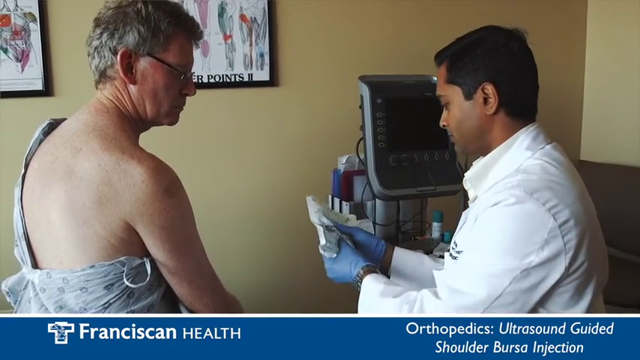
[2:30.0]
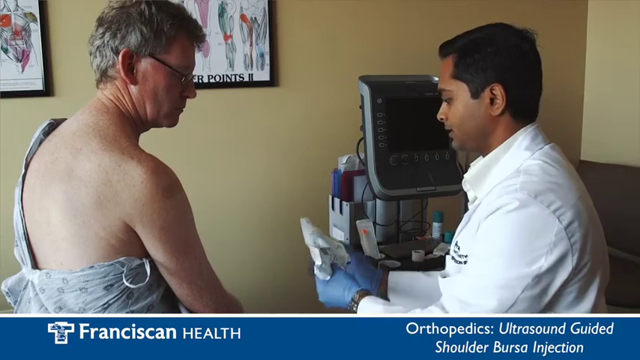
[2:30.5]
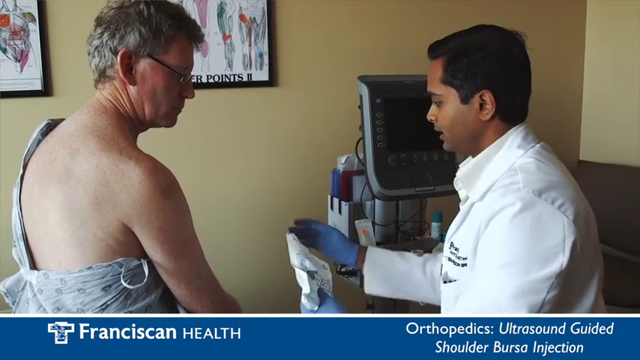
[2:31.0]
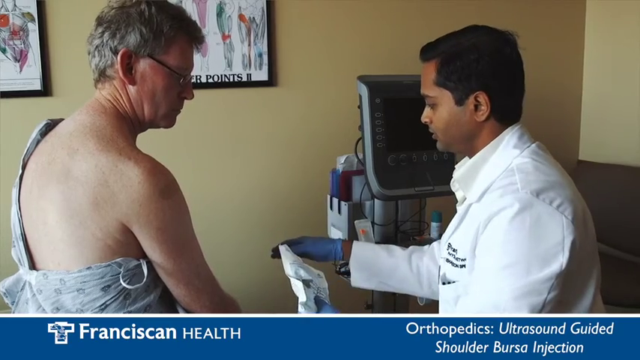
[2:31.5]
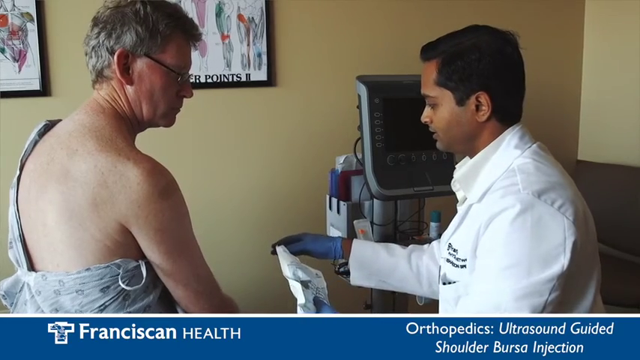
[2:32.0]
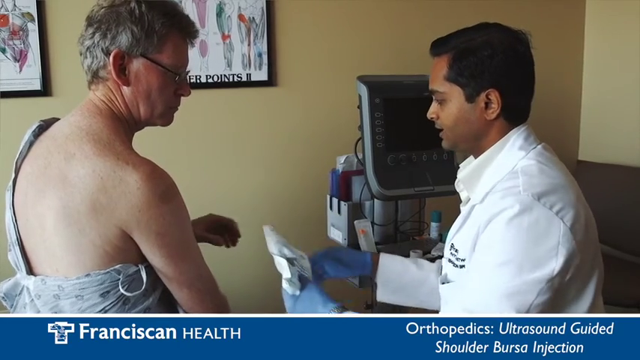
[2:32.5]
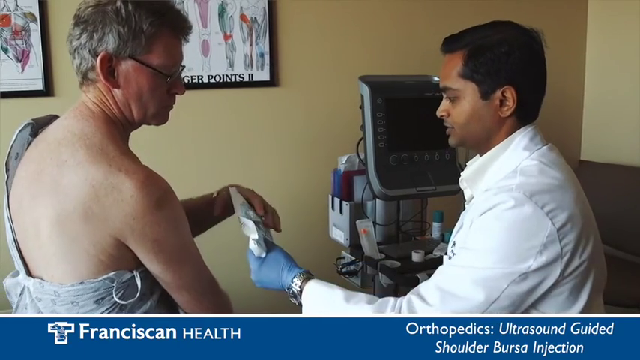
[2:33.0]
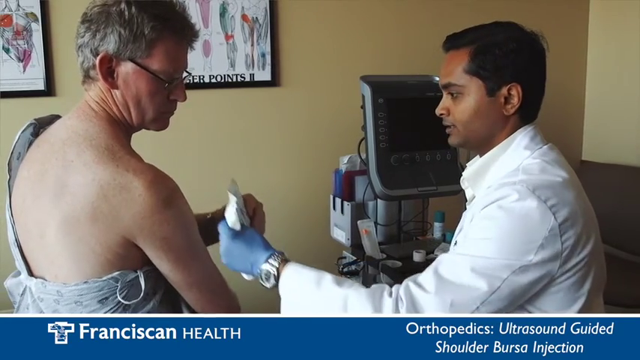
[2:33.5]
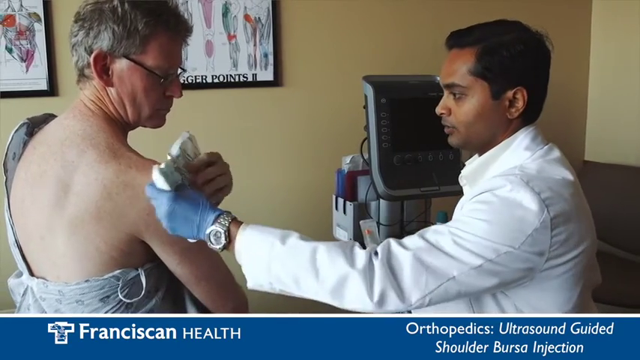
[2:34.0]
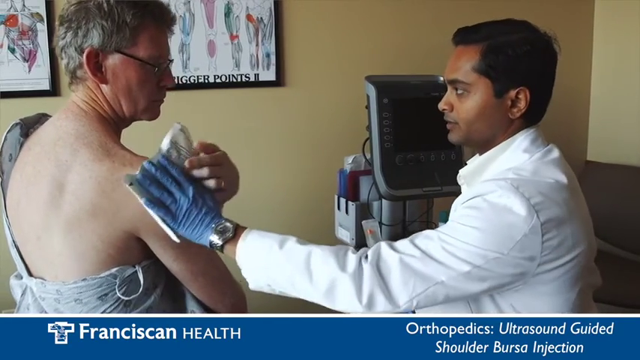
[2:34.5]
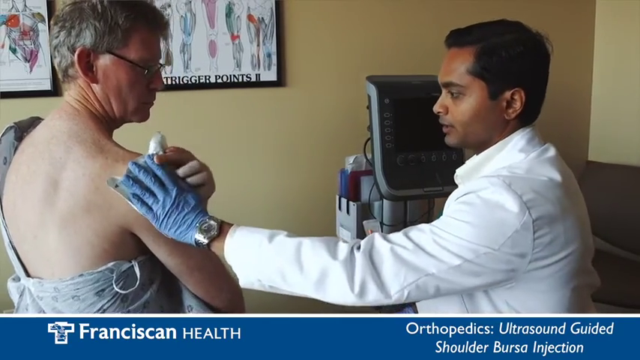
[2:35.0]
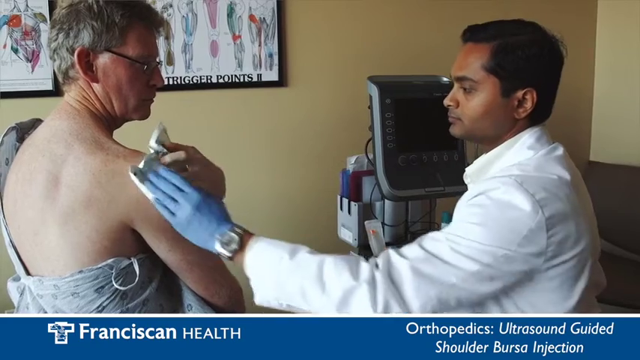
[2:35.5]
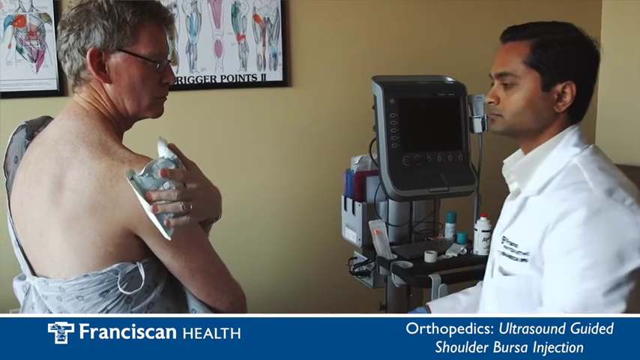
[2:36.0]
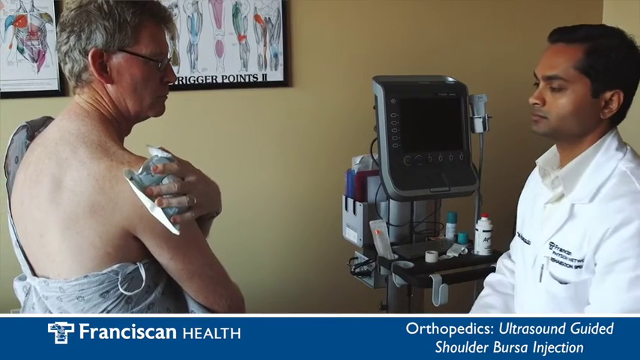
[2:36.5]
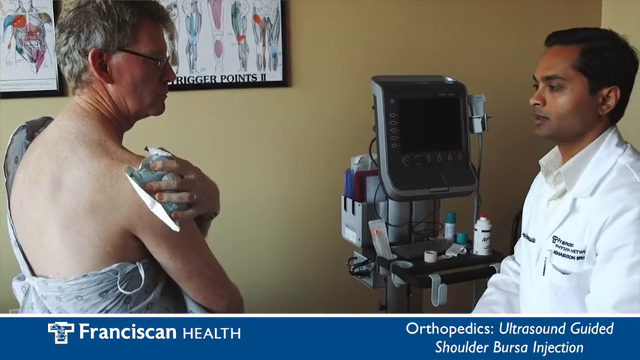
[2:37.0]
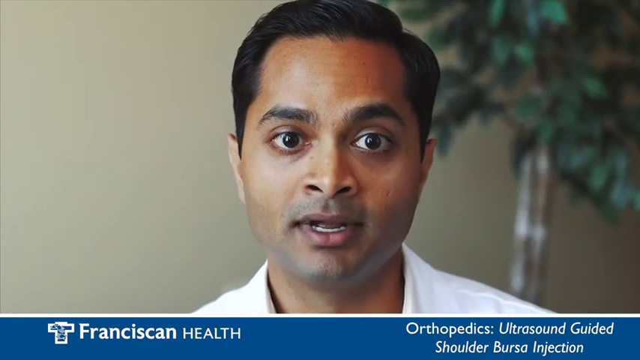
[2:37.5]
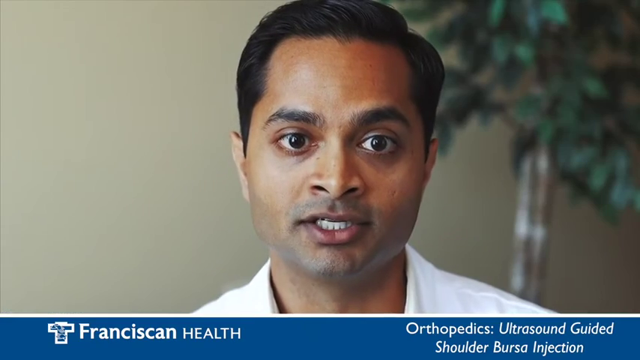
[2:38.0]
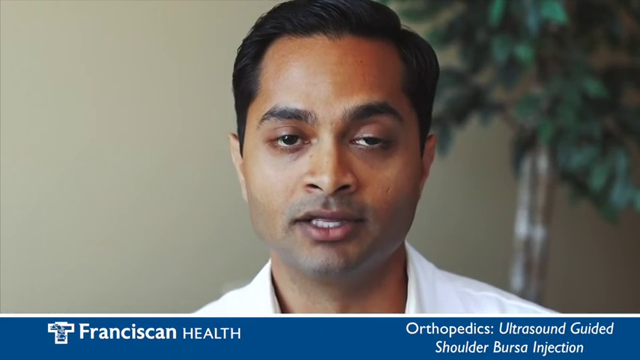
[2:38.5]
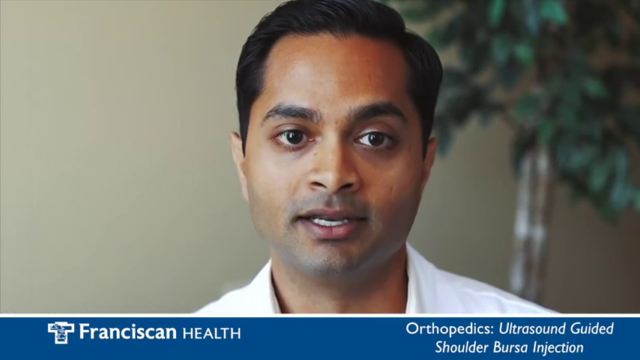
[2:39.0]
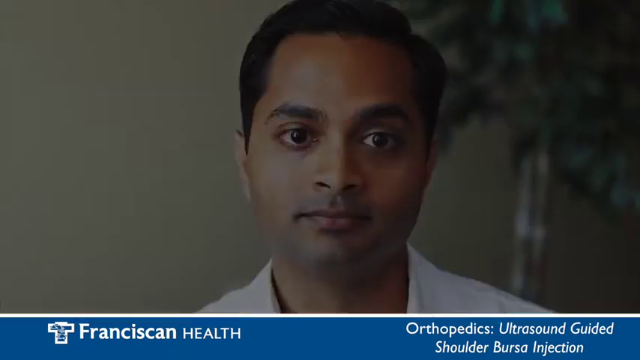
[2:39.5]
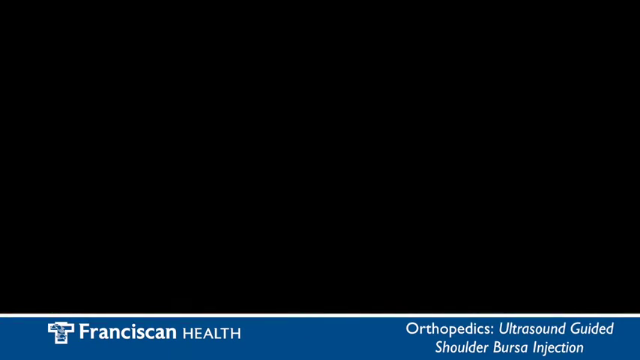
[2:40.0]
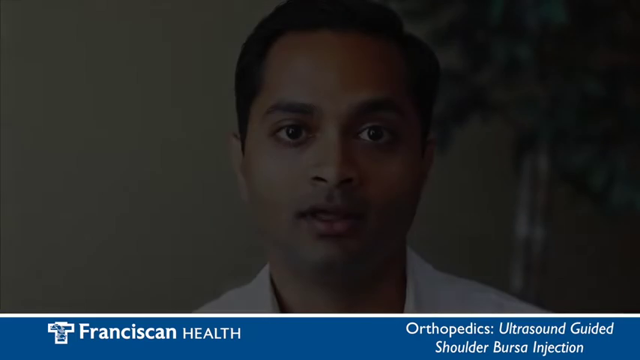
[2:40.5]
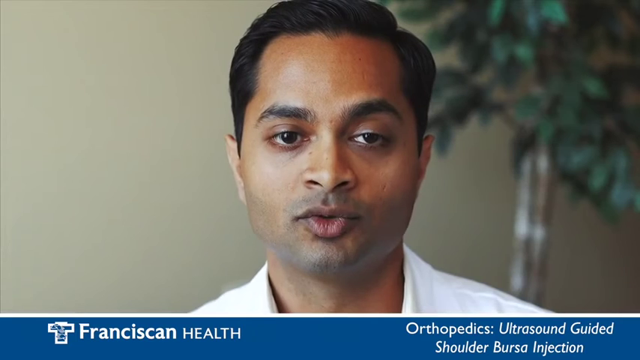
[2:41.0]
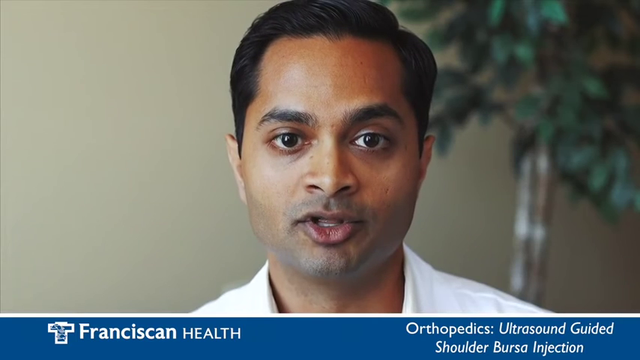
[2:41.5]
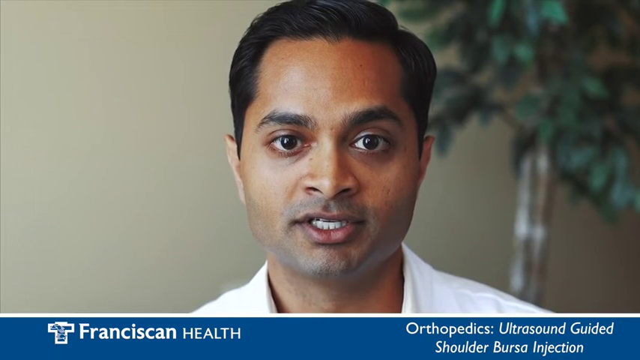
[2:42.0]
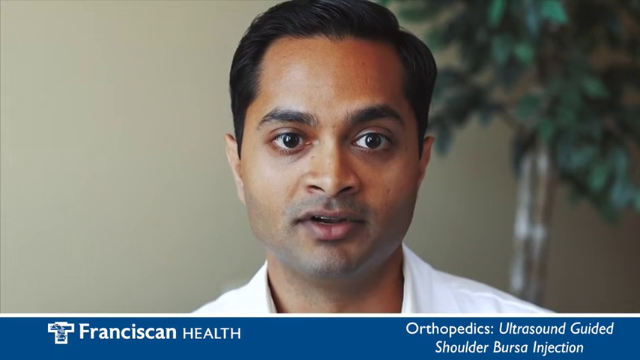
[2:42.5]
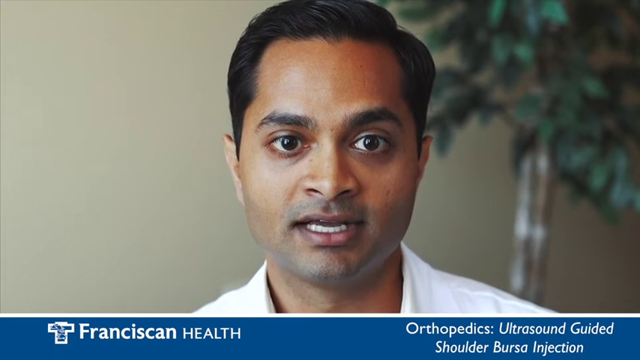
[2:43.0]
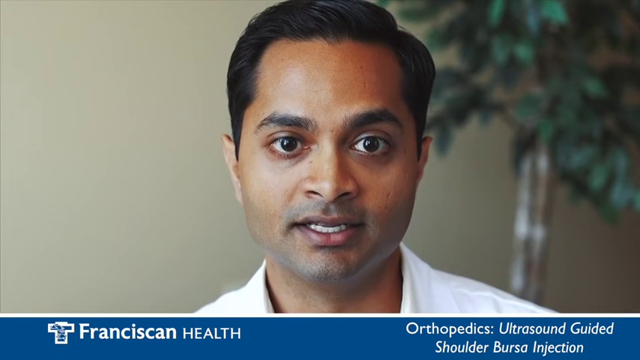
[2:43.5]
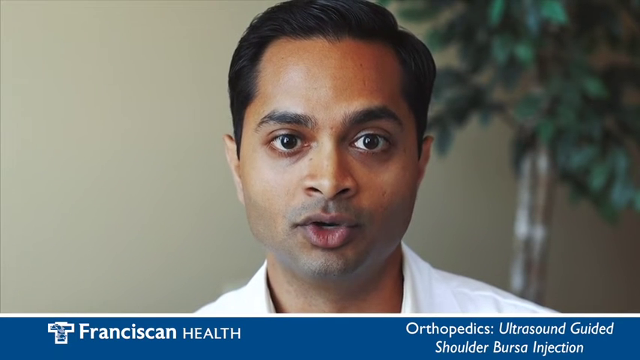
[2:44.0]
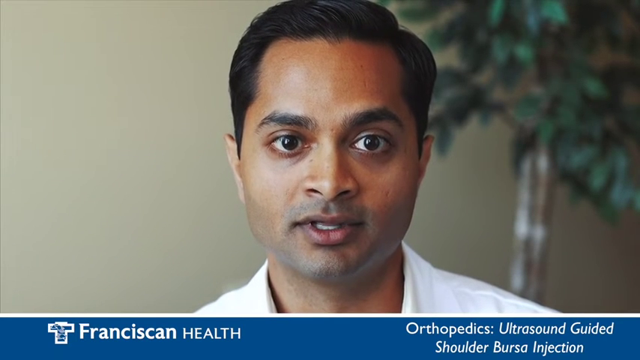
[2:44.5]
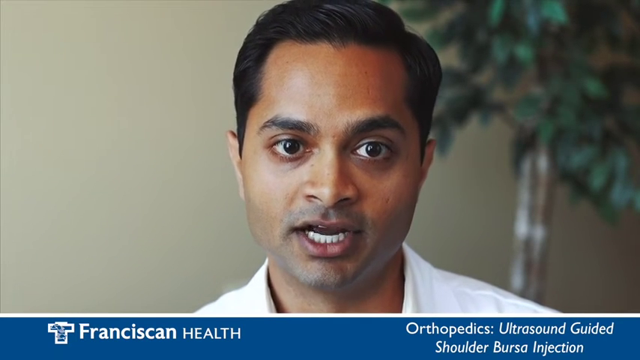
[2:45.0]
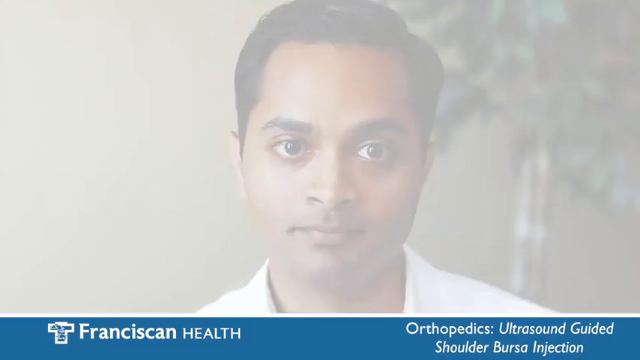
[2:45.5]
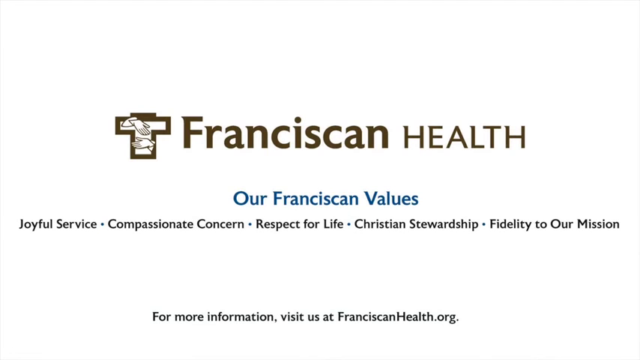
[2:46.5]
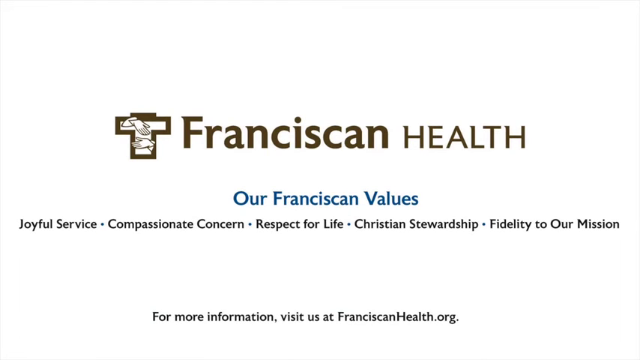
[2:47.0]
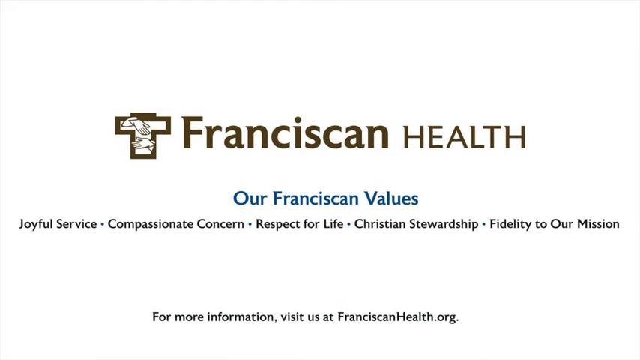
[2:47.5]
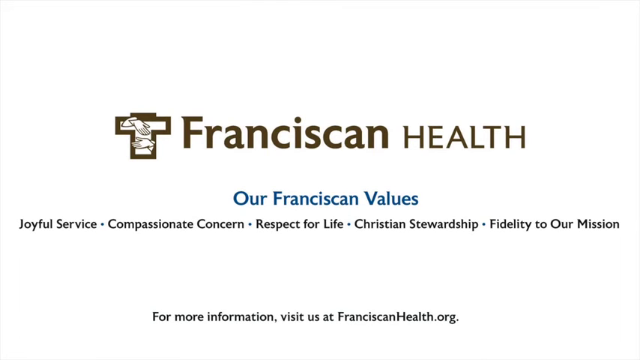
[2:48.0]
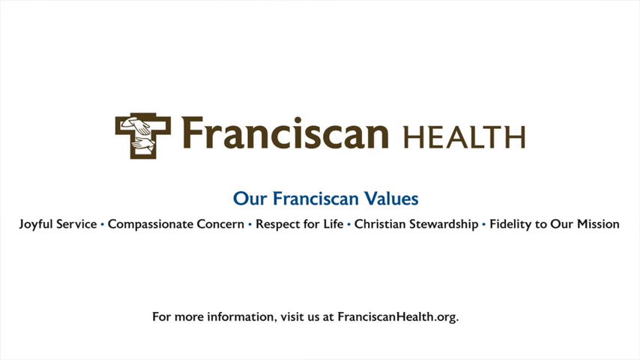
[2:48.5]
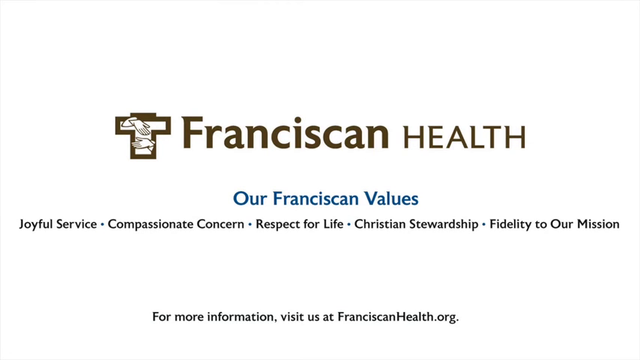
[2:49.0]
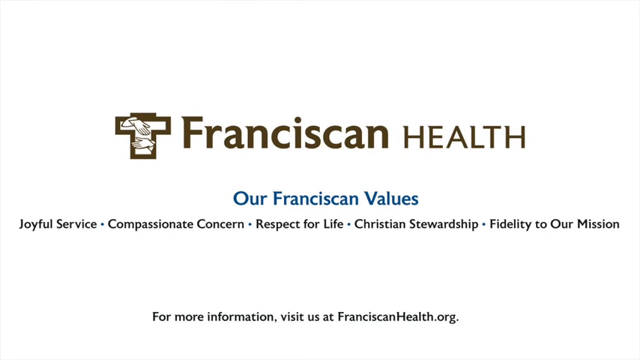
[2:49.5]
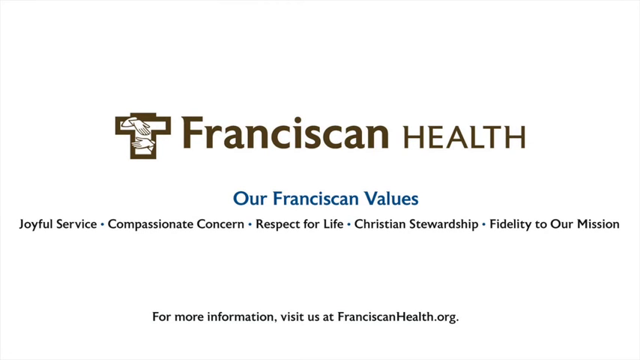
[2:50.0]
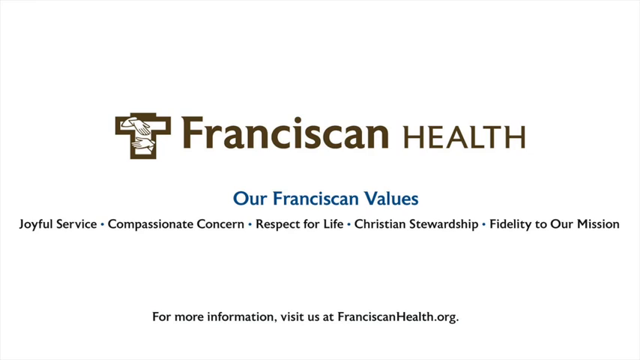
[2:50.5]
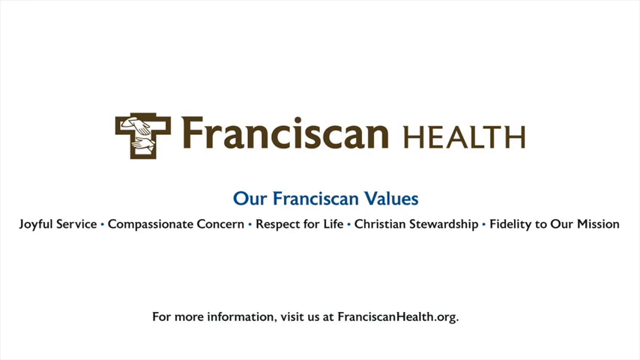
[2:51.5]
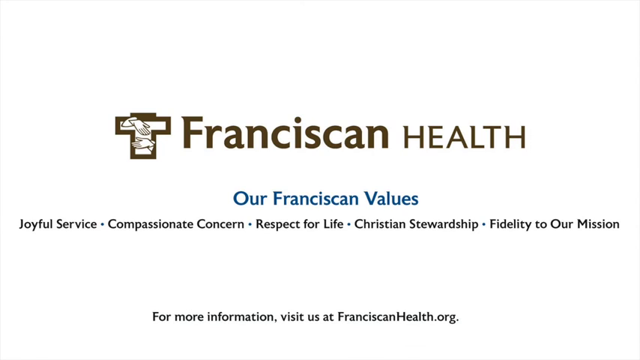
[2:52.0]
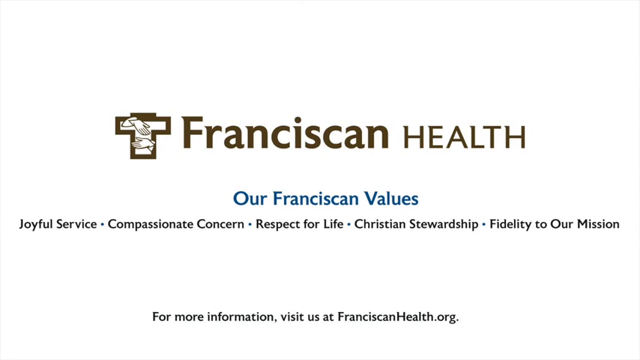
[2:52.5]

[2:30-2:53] The doctor looks at the patient and at the pack he is holding, gestures to something on the ground, and hands the pack to the patient, who takes it with his left hand while looking at the doctor's hand holding the pack. They apply the pack, which looks to be an ice pack, to the injection site. The camera then shows a close-up of the doctor, who has a very rich tan, dark skin color, looking at the camera and speaking. Behind him is a plant with what looks to be either two stems or a supported trunk, and several branches with leaves. A white title screen appears with "Franciscan health" in bold brown, displaying the Franciscan values: "joyful service compassionate concern respect for life Christian stewardship and fidelity to our mission," followed by "for more information" text with a Franciscan health org website.